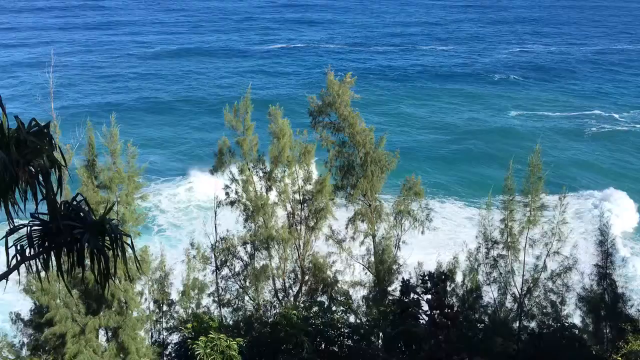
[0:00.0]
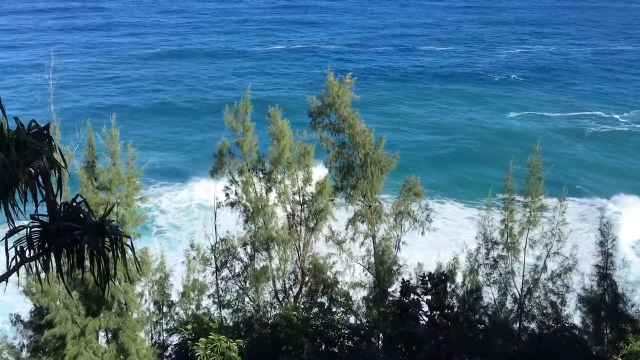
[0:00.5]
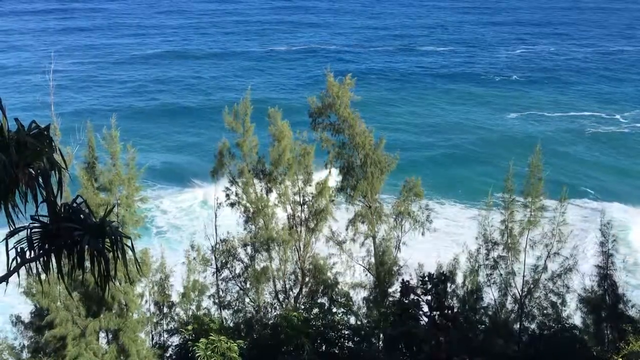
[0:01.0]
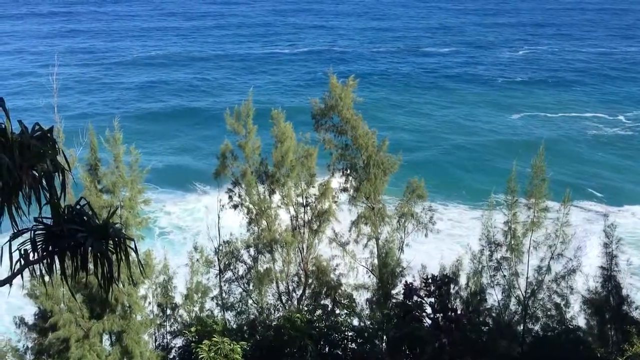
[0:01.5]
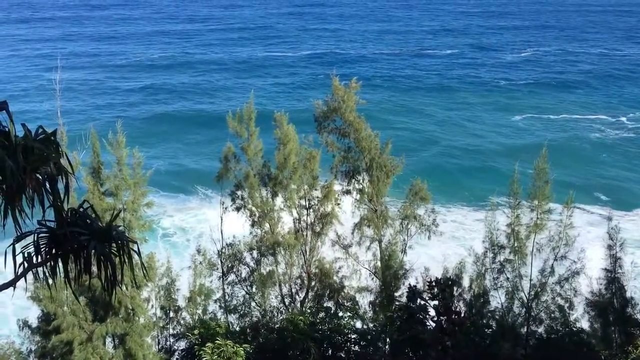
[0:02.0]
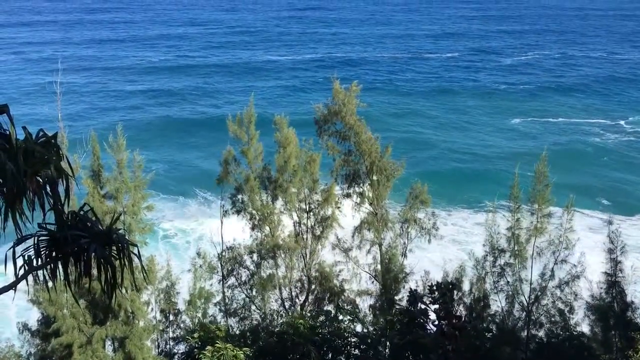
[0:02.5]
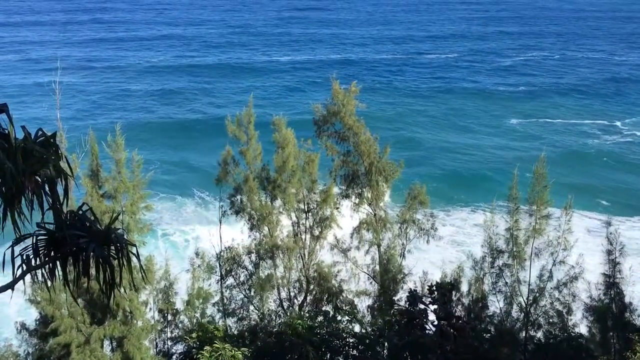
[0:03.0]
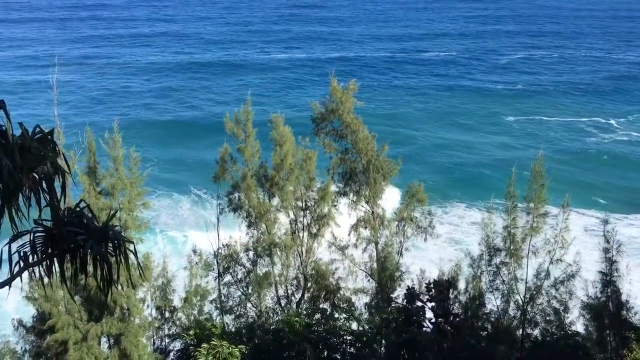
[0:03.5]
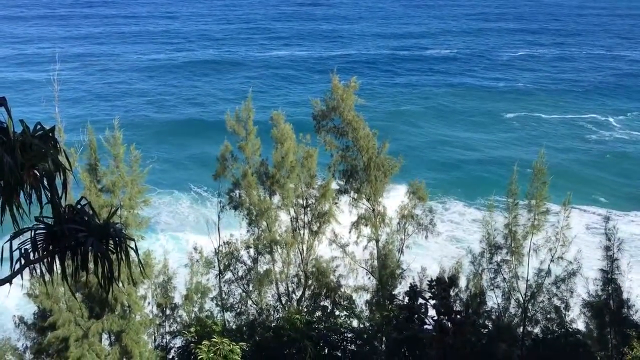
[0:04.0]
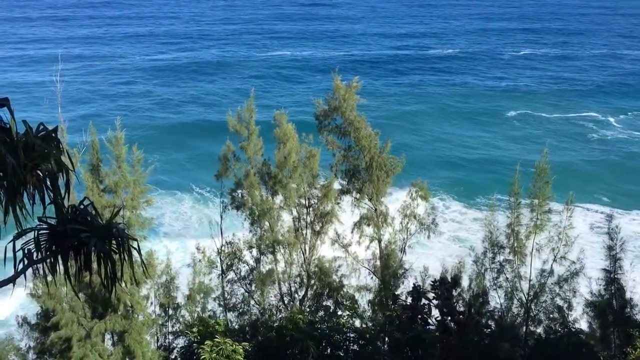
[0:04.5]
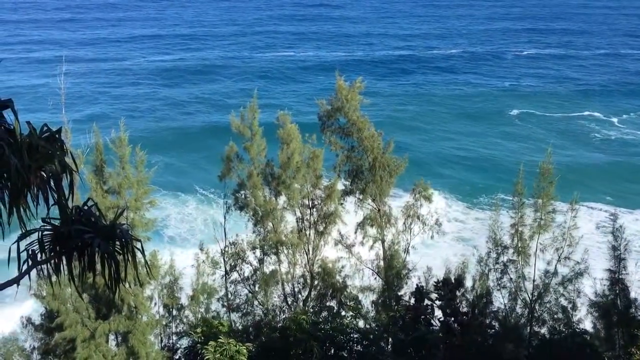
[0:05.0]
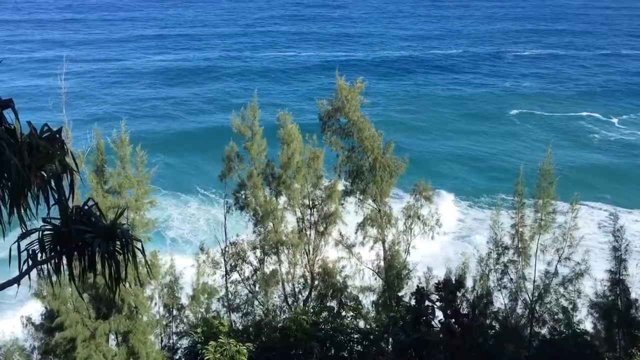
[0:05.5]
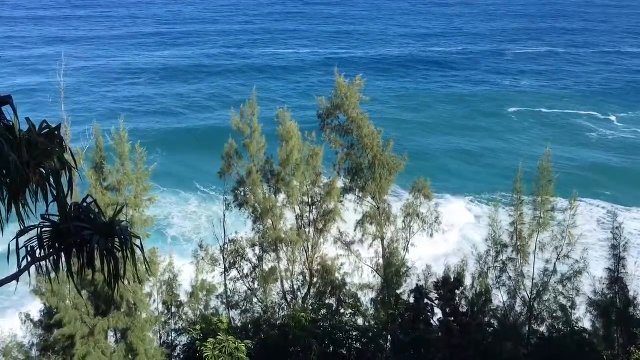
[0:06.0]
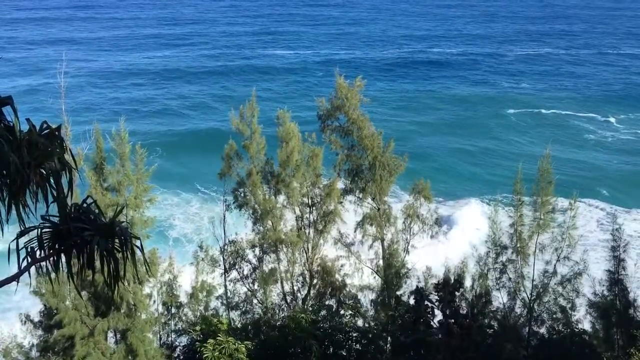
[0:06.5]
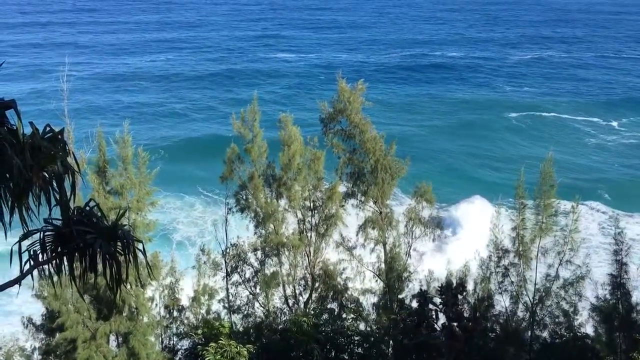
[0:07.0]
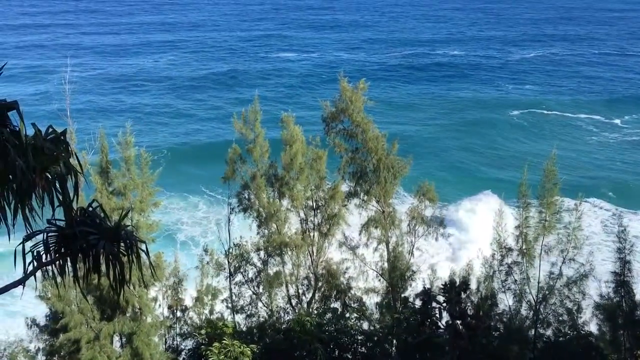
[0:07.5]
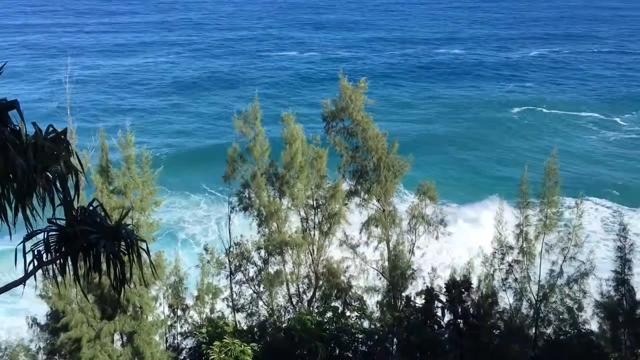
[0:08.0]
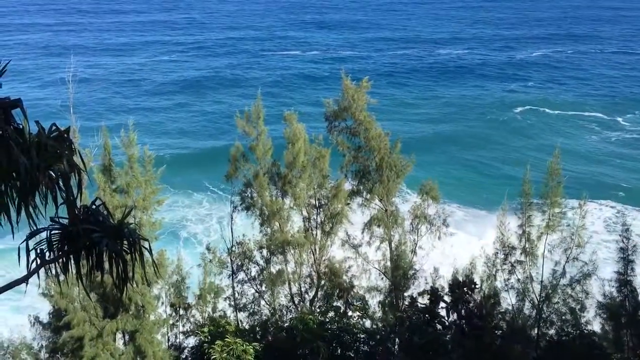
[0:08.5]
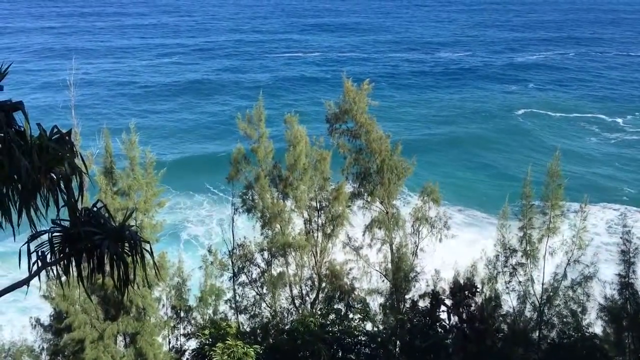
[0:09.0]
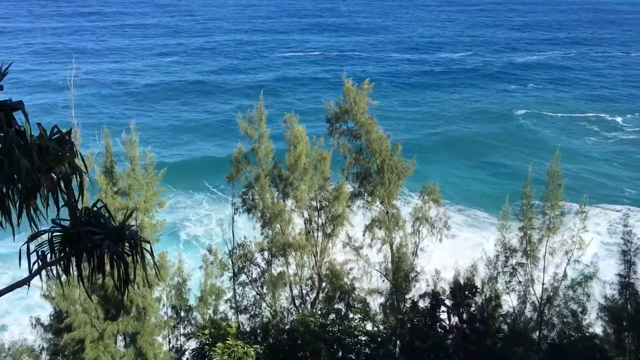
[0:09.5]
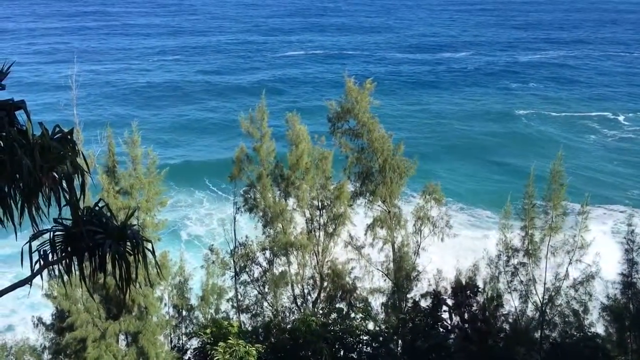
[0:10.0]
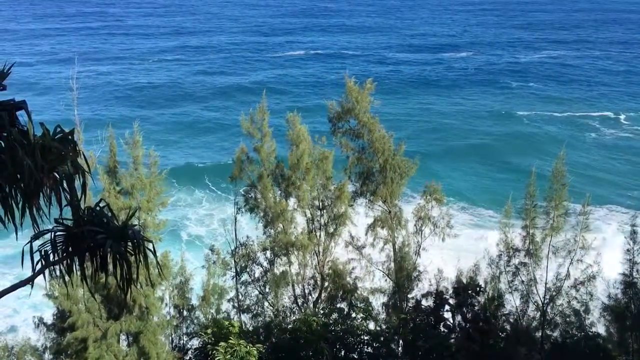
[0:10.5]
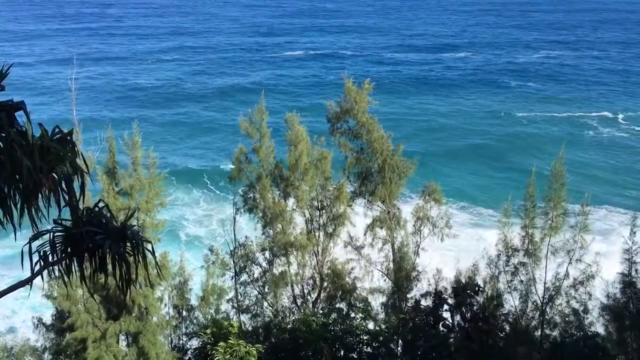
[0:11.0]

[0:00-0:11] What appears to be a nature video shows an ocean shoreline with green vegetation poking out and overlapping it. The ocean extends past the frame at the top. Near the top the water is a darker blue, further out and deeper. Closer to the bottom of the screen and the vegetation, it becomes a kind of light aqua before reaching a section where waves start forming, with an almost foamy white where the waves are kind of crashing and merging with one another. At the bottom of the screen, various light green vegetation extends up, though some of it is covered in shadow.